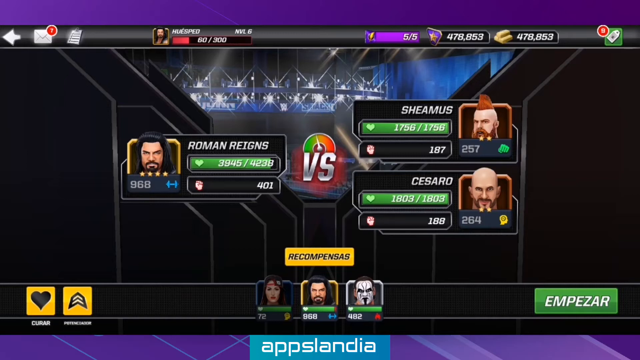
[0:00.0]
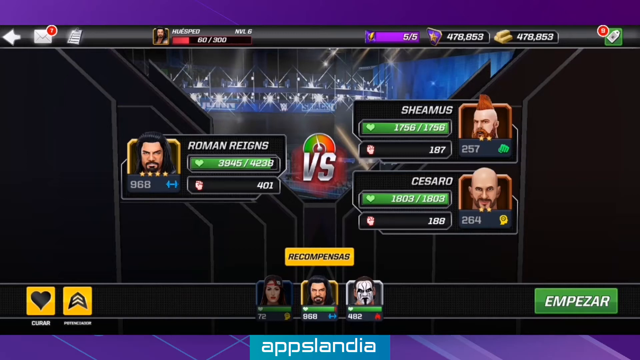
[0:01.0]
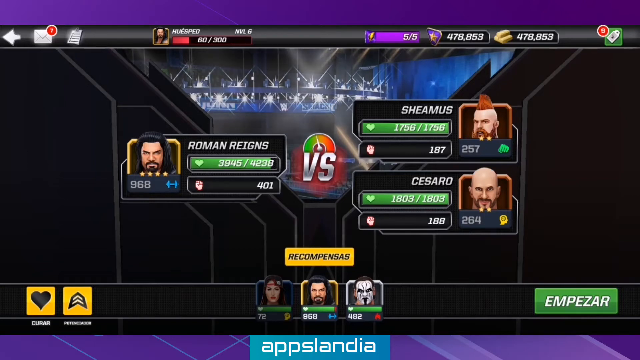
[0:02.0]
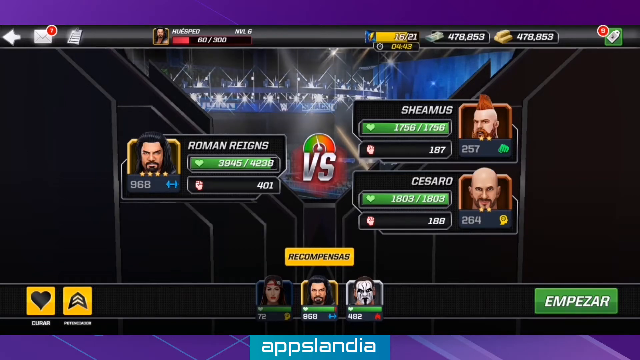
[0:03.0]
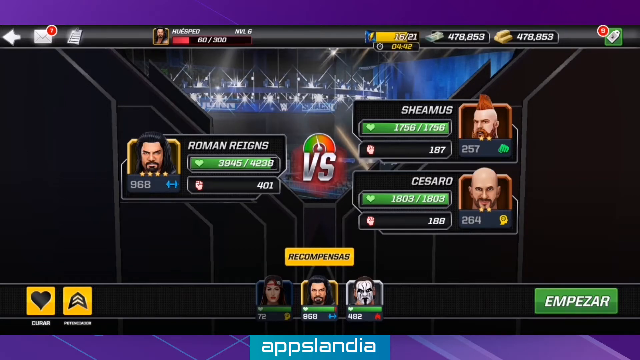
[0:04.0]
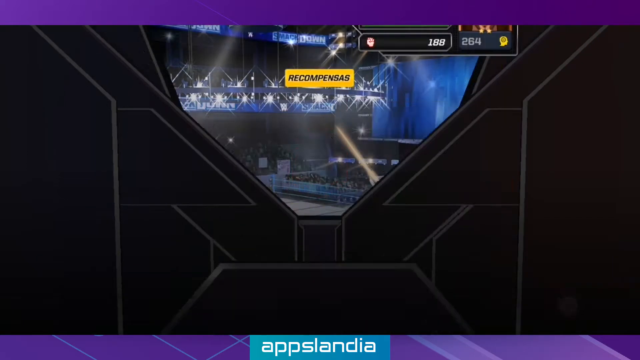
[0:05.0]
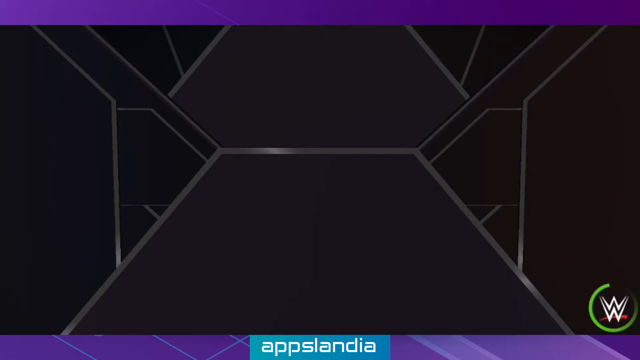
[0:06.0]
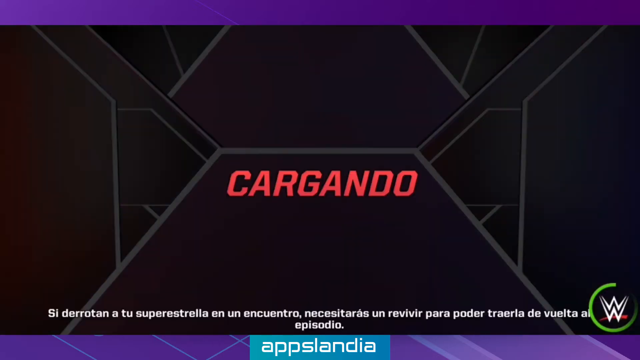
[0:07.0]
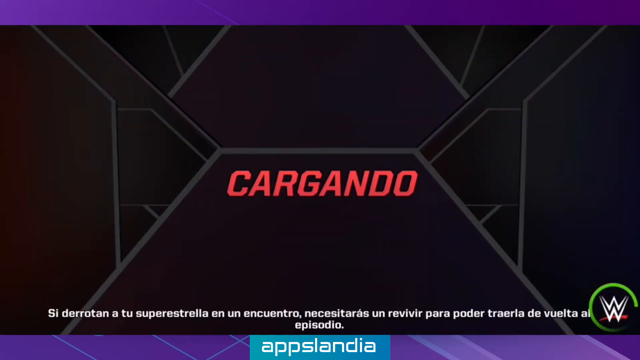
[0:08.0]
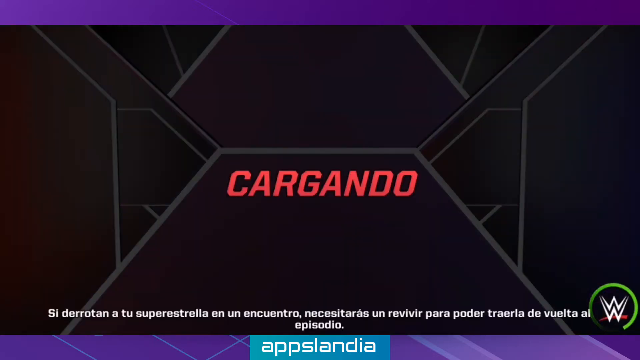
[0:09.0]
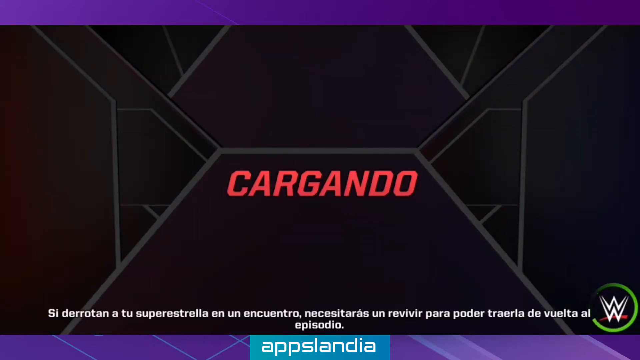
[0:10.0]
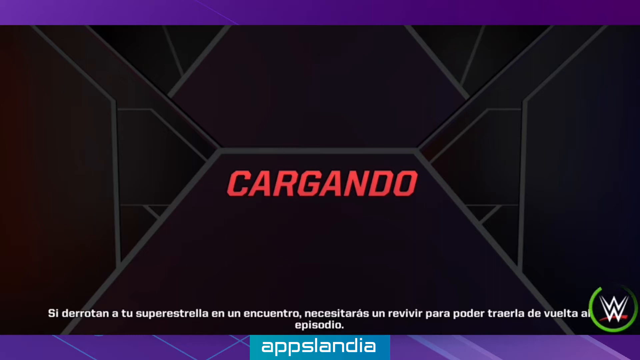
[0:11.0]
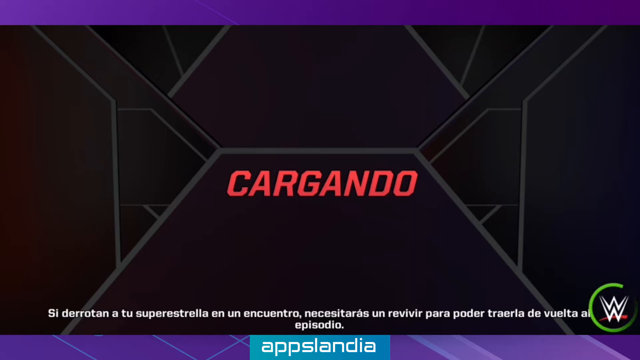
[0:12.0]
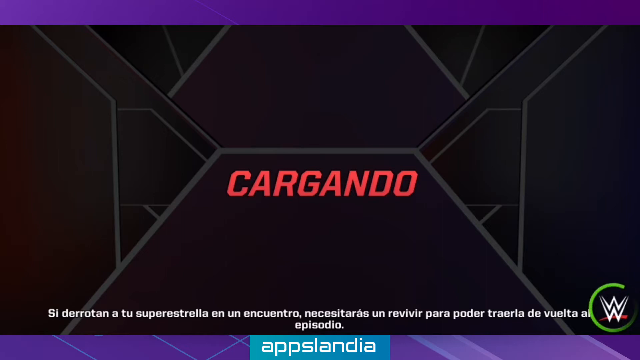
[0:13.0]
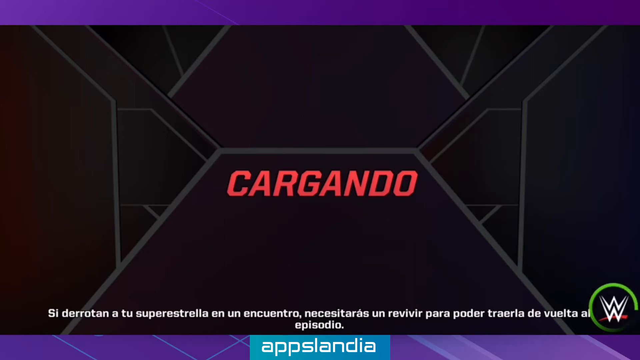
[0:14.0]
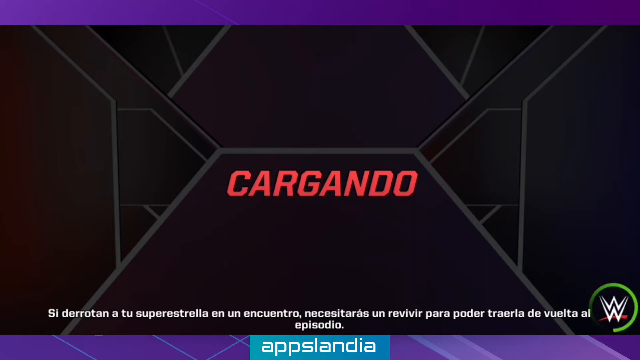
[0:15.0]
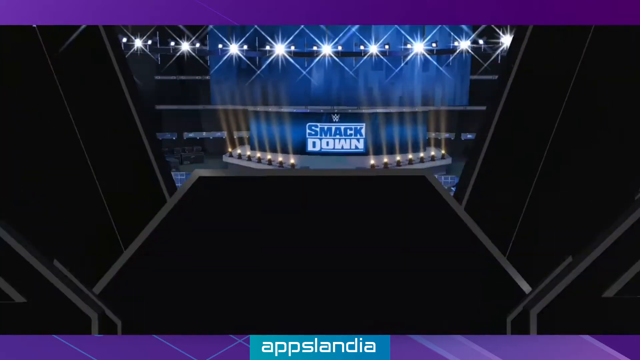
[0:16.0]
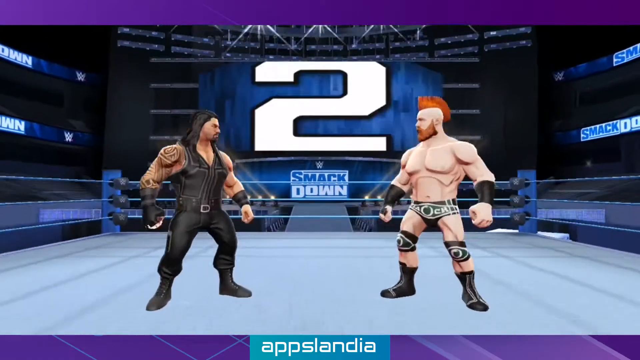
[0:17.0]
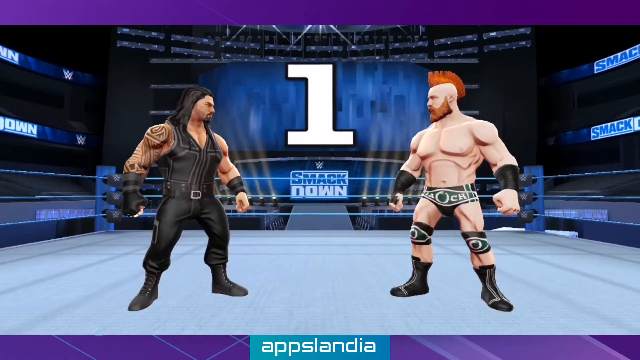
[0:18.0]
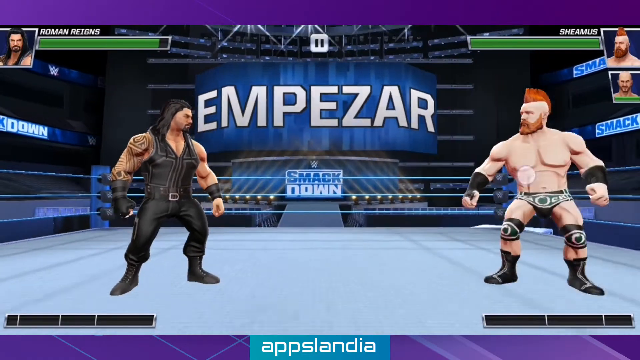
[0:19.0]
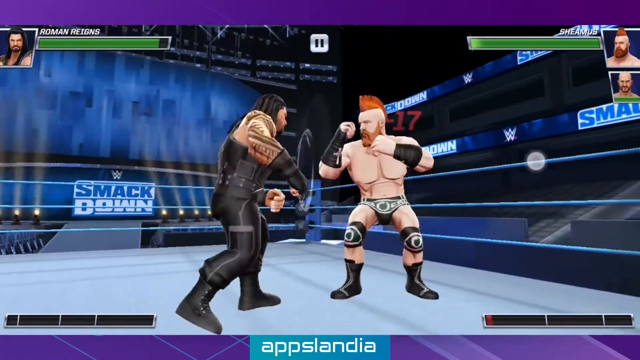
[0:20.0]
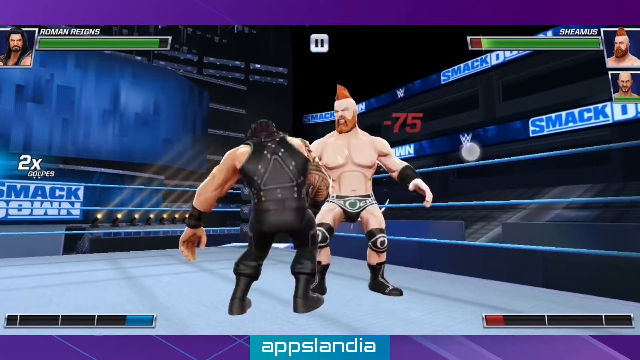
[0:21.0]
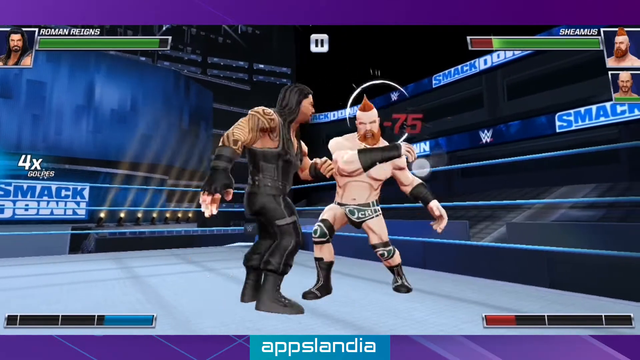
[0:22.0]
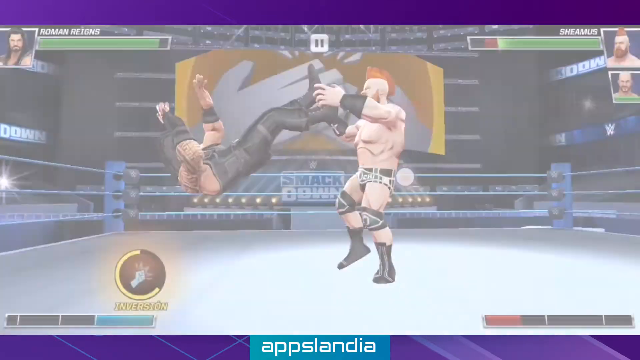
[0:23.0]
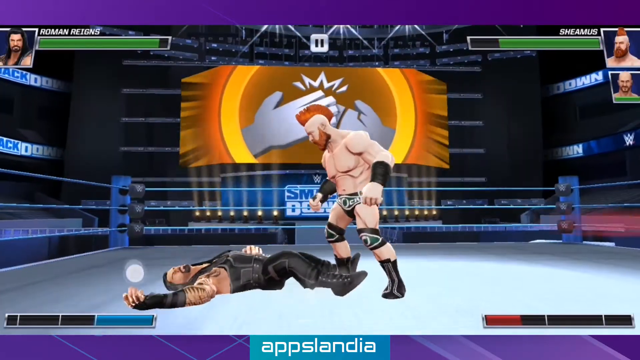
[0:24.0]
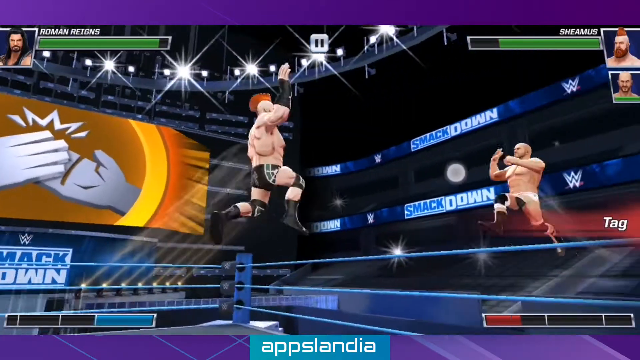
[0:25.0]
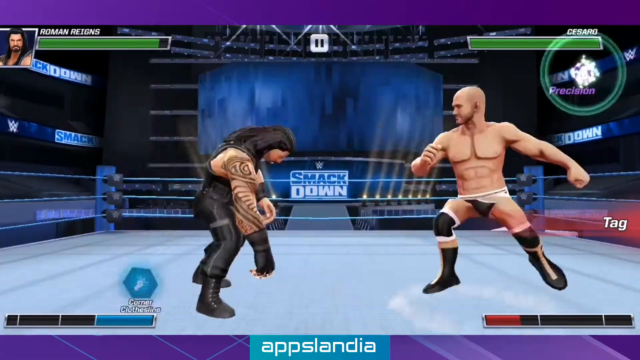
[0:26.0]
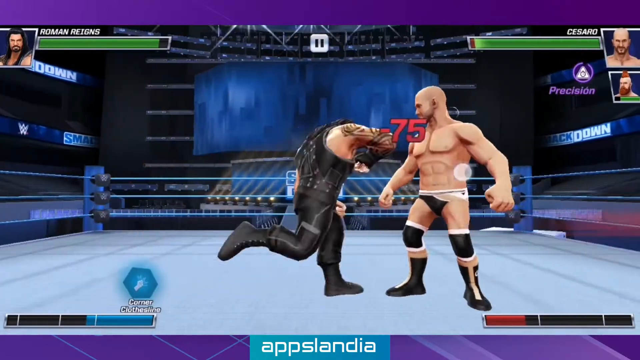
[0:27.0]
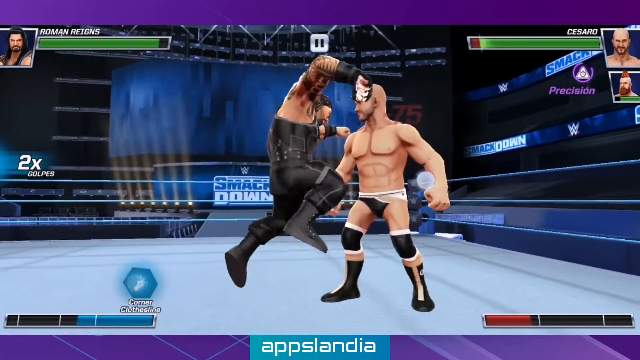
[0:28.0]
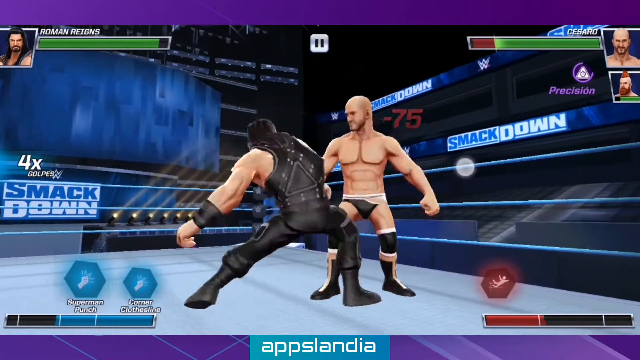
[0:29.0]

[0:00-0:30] The video appears to be a video game, apparently a wrestling game: one wrestler's name is visible, and there is a "W" sign at the bottom. Two sides are in a ring about to fight. One side has one wrestler and the other has two, who can tag team, in what looks like player one versus player two. Early in the match the second player has already switched out his wrestlers. One of the characters is Roman Reigns.